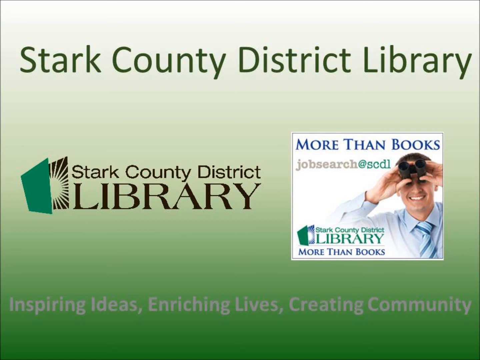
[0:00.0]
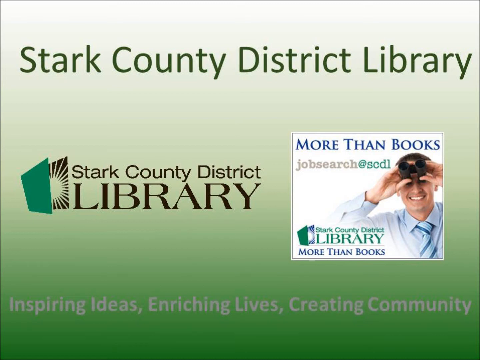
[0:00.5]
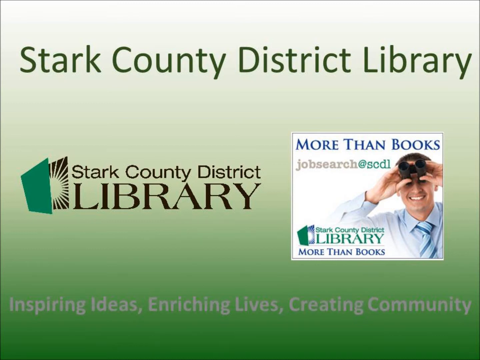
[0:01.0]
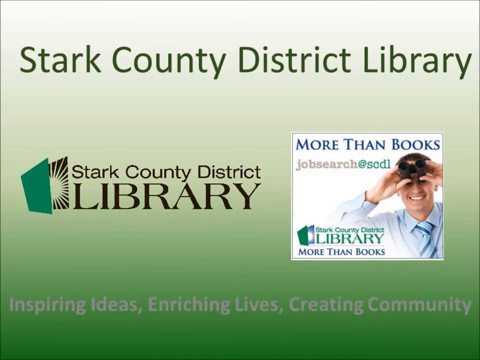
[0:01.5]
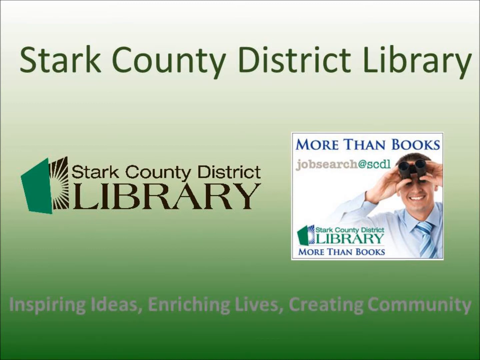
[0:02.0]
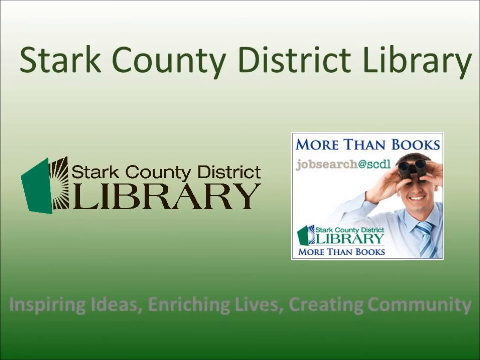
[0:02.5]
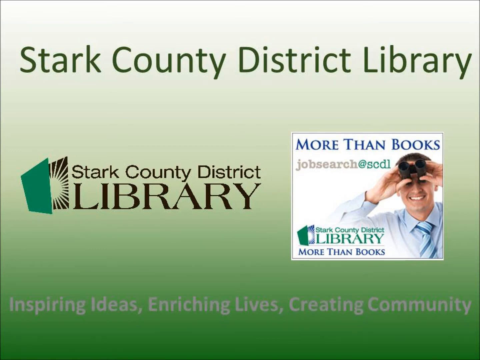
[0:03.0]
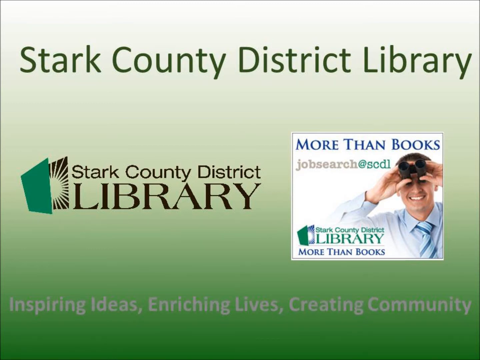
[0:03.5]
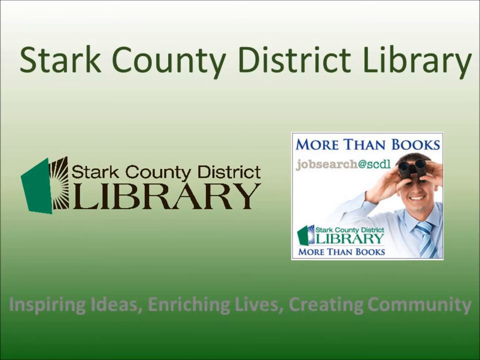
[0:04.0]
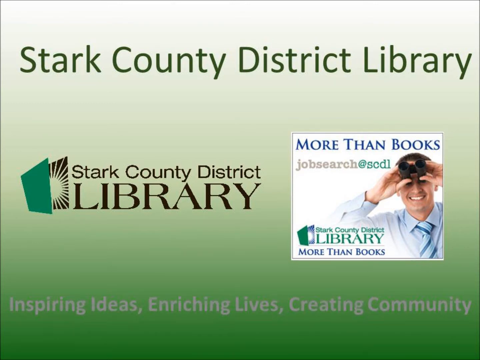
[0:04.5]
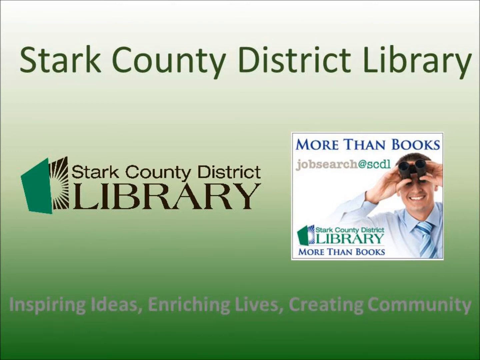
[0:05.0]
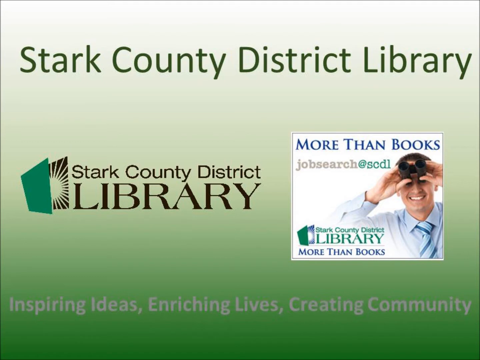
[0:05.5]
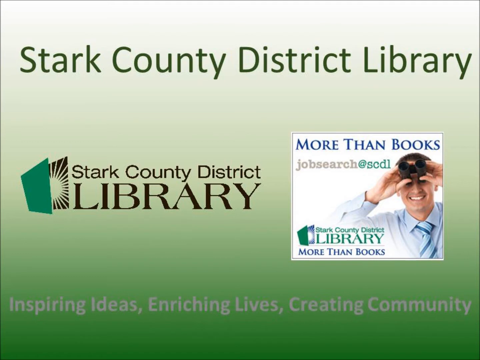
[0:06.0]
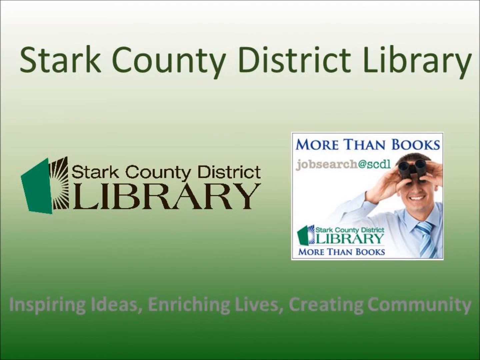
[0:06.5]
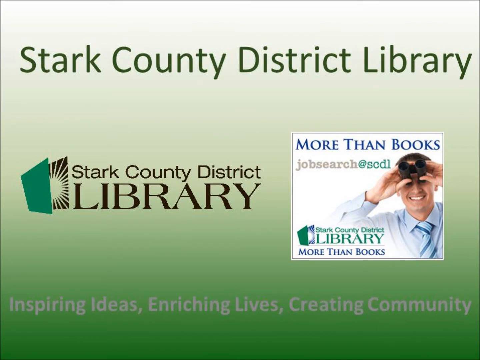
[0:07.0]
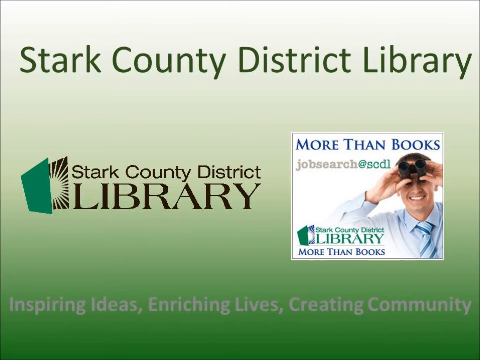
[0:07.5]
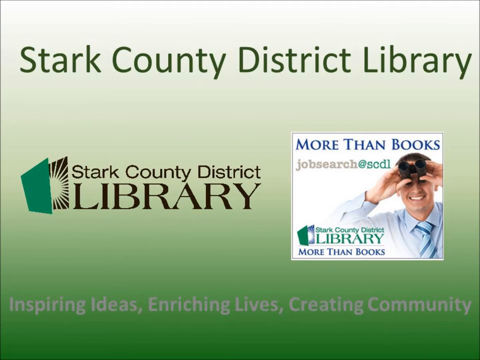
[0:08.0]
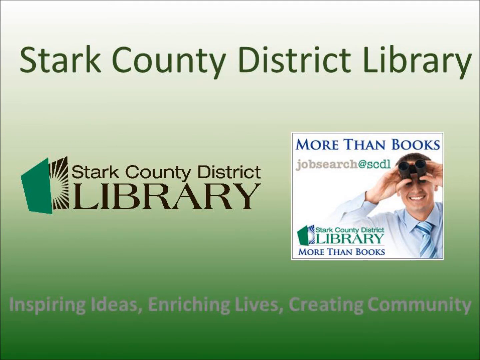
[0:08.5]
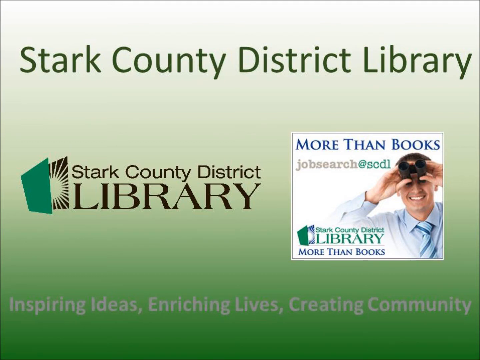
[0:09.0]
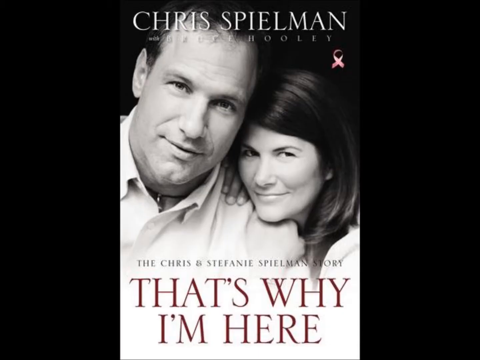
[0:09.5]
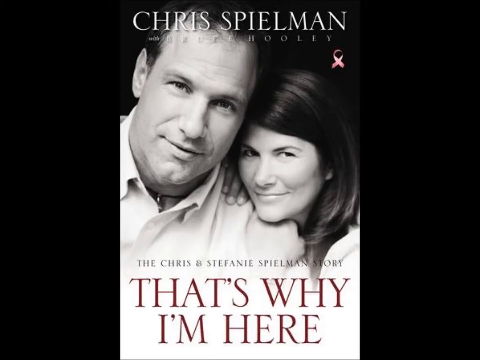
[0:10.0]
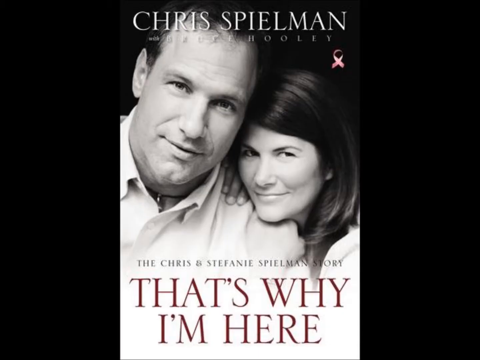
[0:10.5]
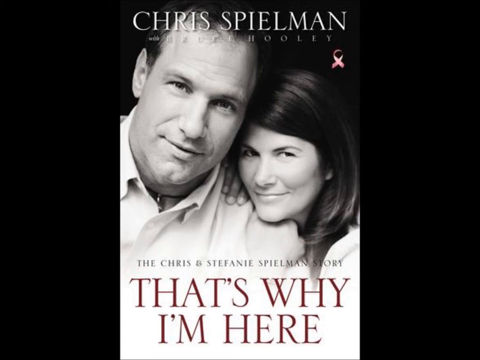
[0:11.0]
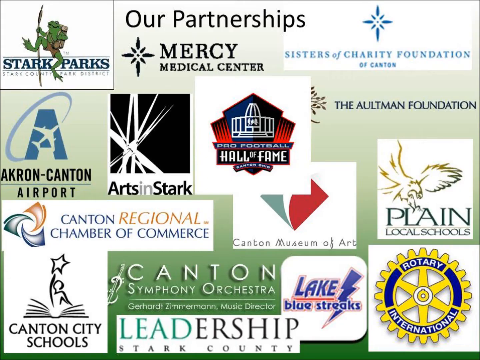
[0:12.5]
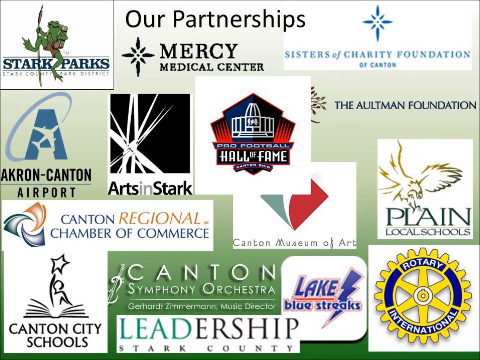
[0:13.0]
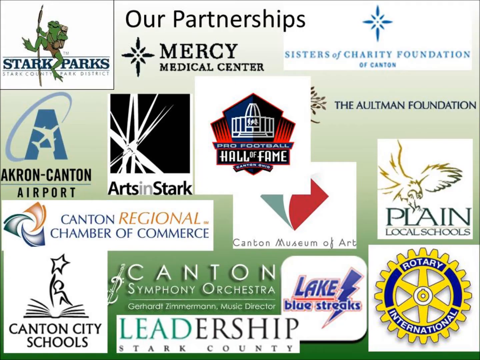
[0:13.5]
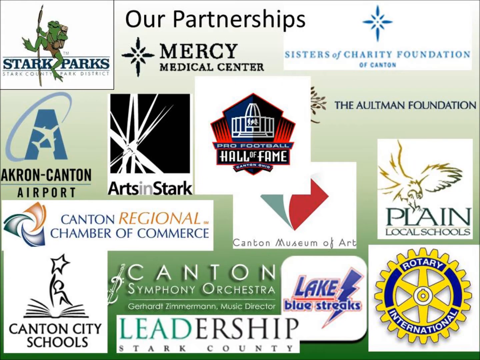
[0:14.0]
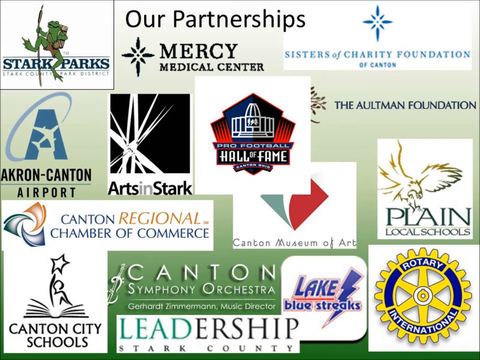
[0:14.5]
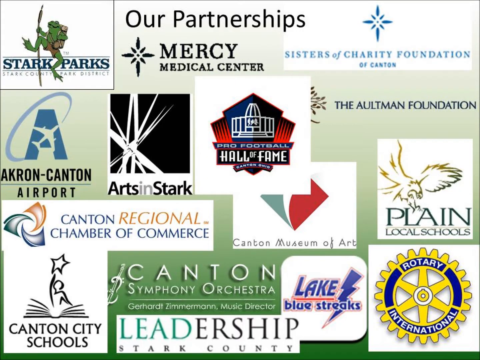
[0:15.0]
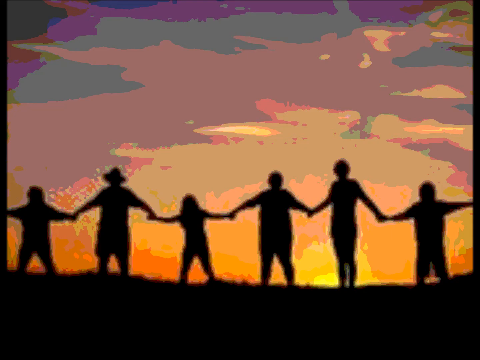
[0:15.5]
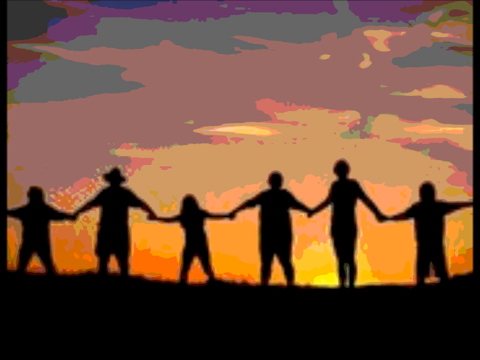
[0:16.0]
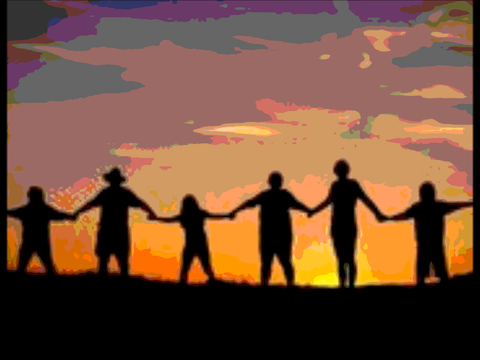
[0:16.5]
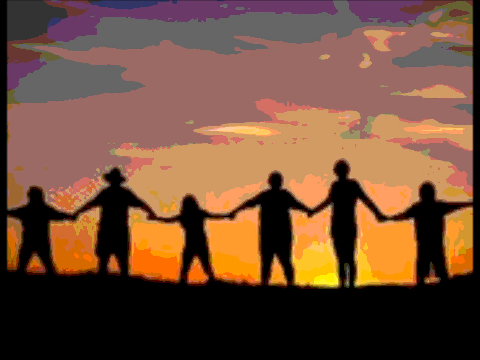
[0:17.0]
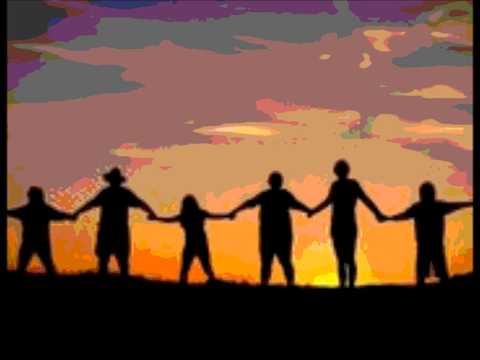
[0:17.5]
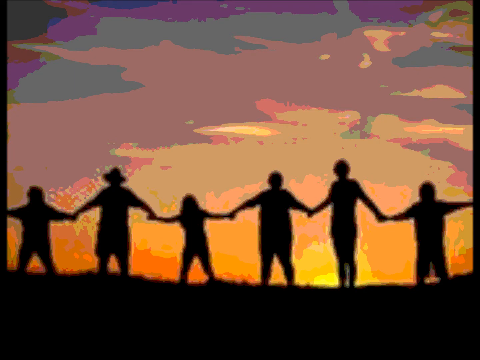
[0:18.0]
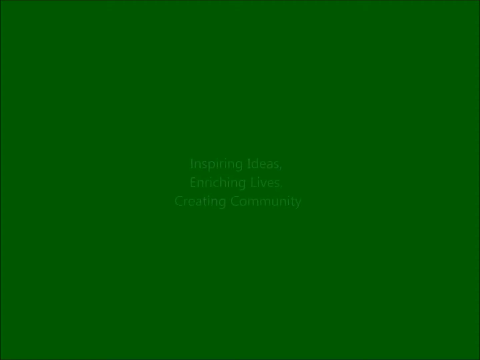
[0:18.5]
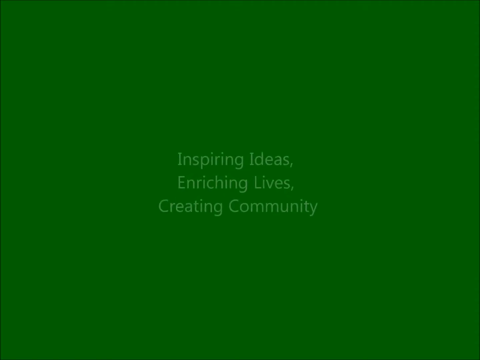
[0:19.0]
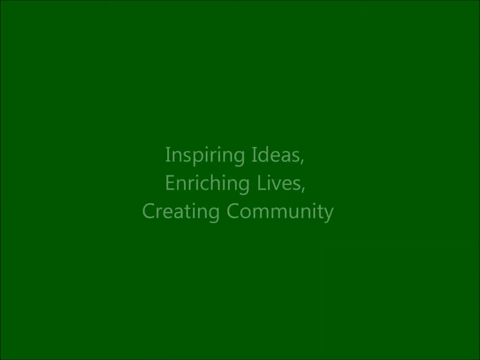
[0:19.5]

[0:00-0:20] A banner advertisement for the Stack County Districts Library focuses on the books the library offers. It appears to be a community library, with the slogan or motto inspiring ideas, enriching lives, creating community, followed by the library's name and the words More than books. Next, a book apparently by Chris Spillian appears, titled That's Why I'm Here; it details the story of Chris and Stephanie Spillman. Different types of books that seem to be available follow. The advertisement then shows the library's partners: the Arts in Stagg, the Blaine Local Schools, the Curtin Symphony Orchestra, the Massey Medical Center, Akron Canton Airport, the Canton Museum of Art, the Rotary International, the Sisters of Chariots Foundation of Canton, and the Lake Blue Strix. Finally, about six shadow images of people, young and old, are shown holding hands.